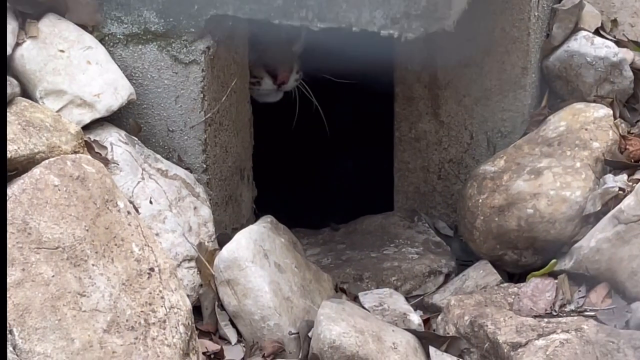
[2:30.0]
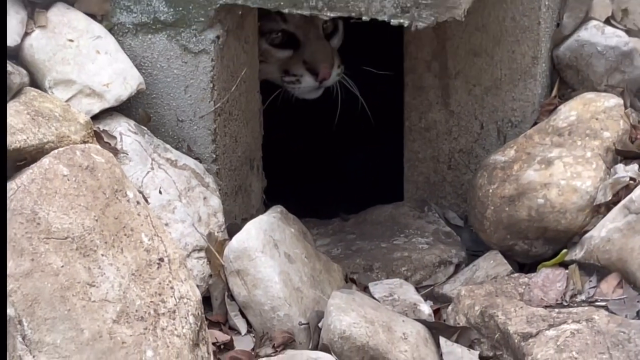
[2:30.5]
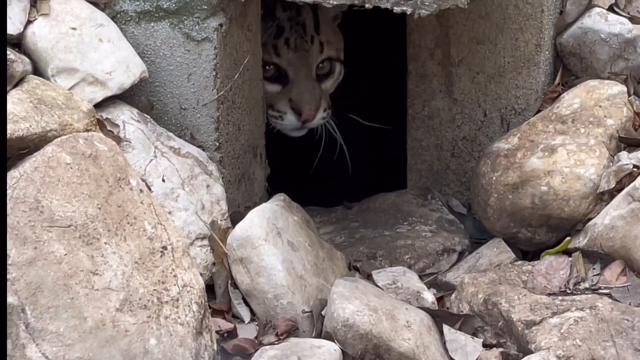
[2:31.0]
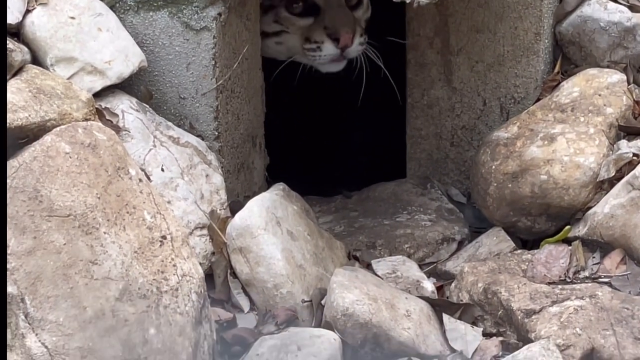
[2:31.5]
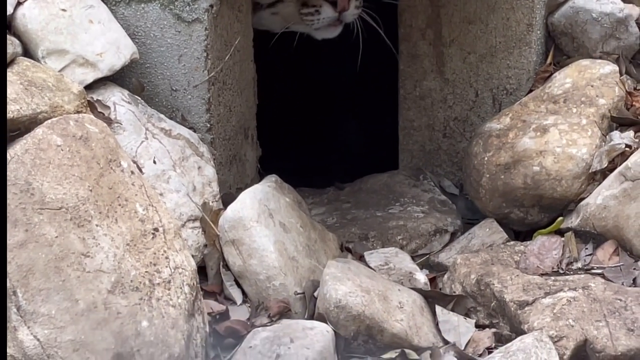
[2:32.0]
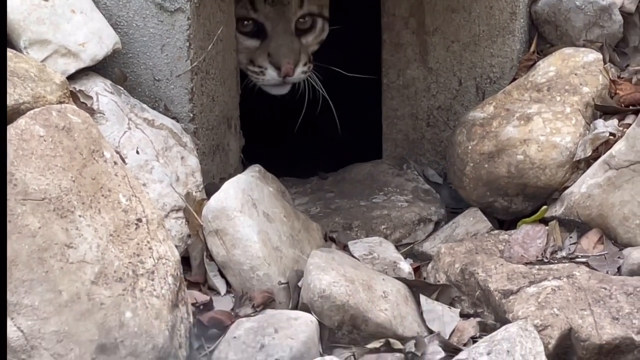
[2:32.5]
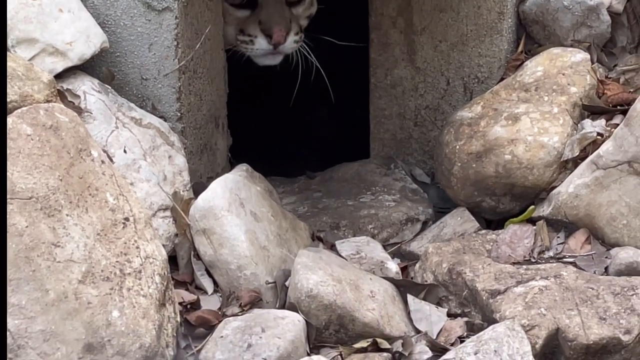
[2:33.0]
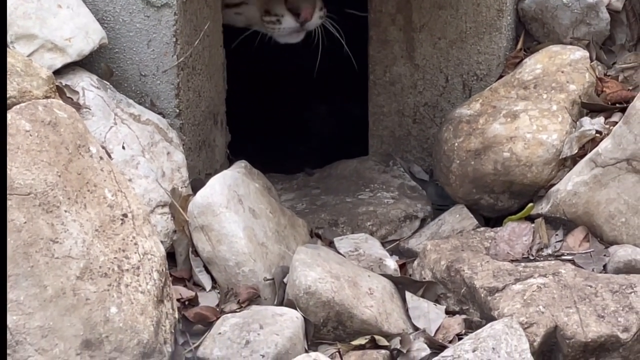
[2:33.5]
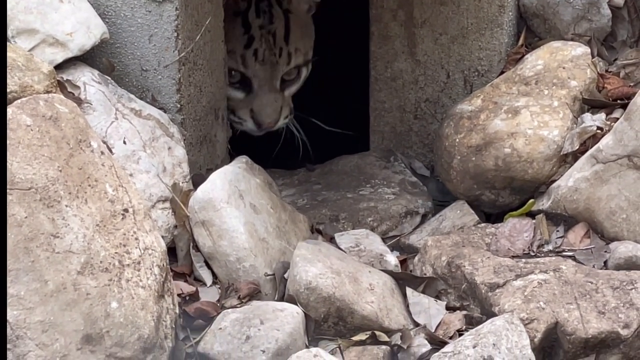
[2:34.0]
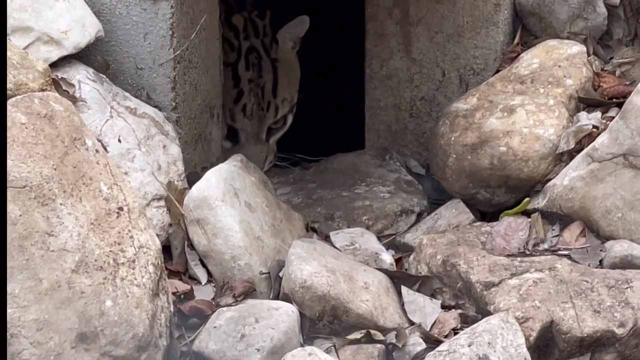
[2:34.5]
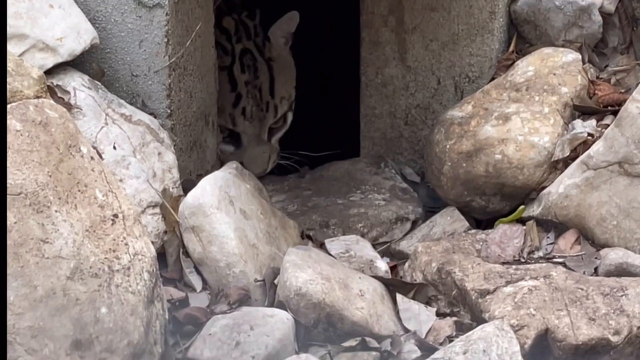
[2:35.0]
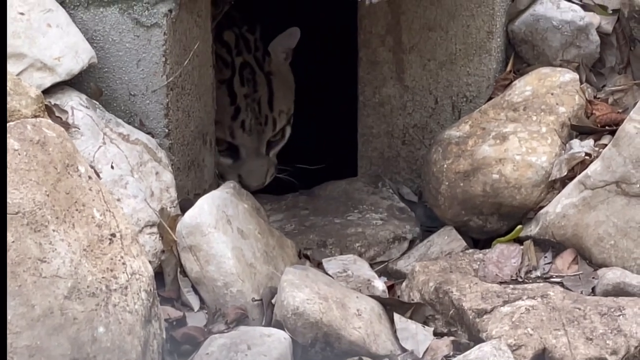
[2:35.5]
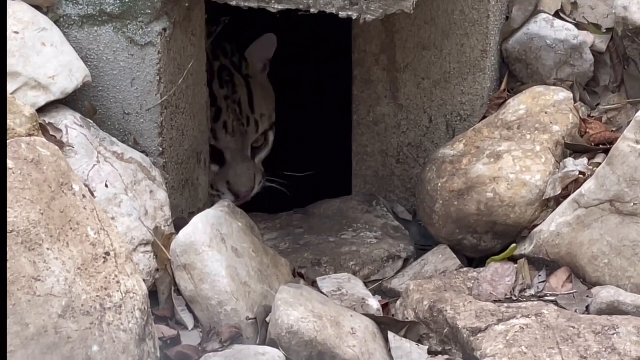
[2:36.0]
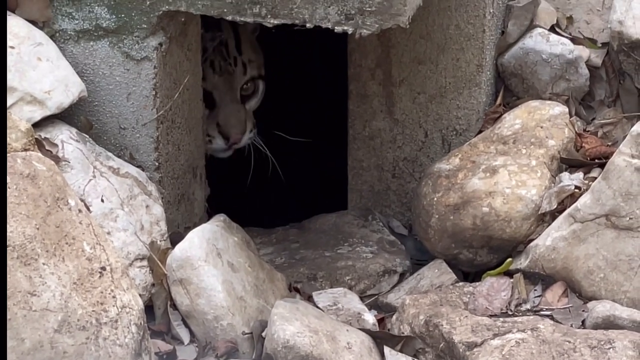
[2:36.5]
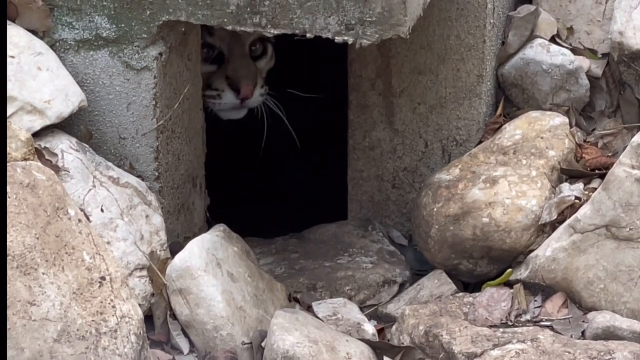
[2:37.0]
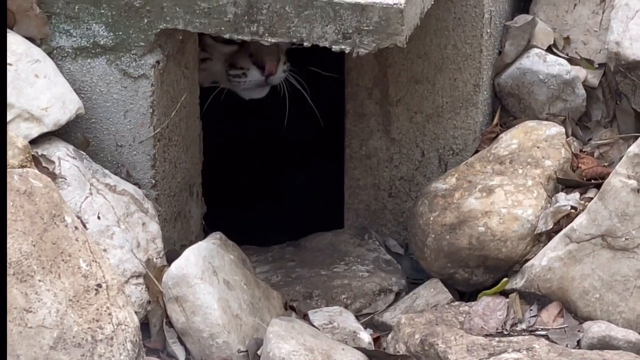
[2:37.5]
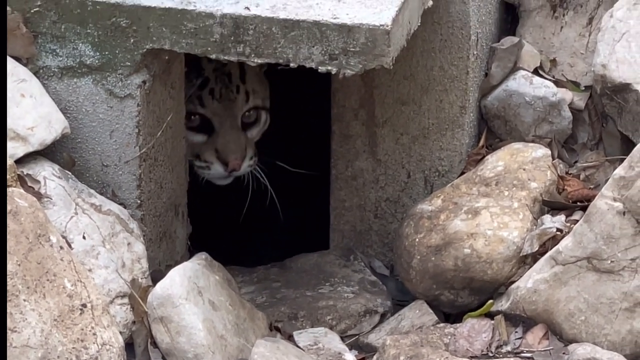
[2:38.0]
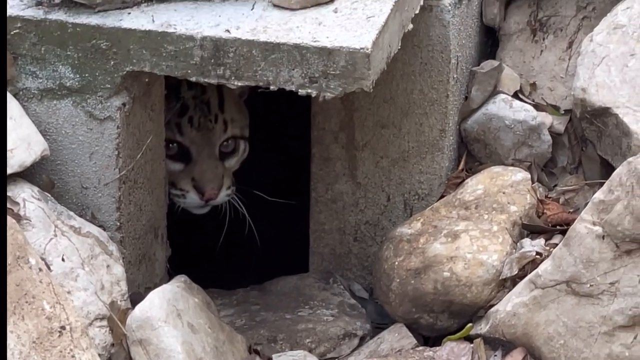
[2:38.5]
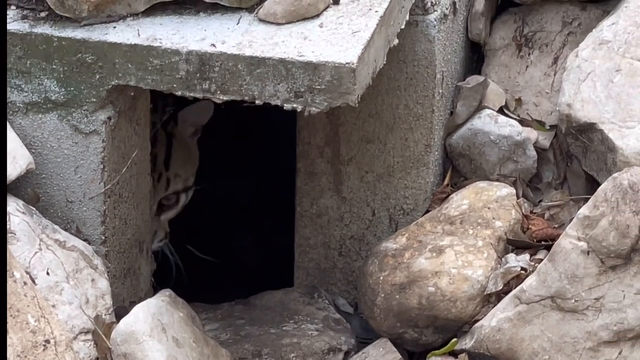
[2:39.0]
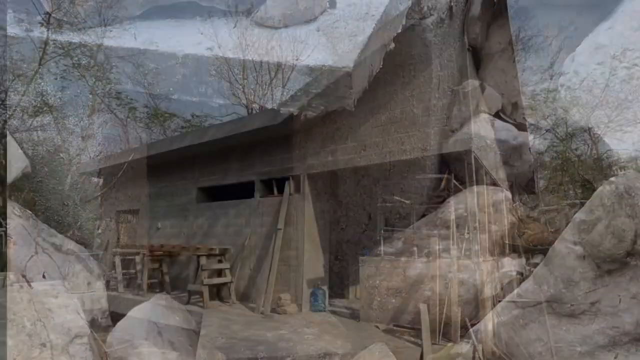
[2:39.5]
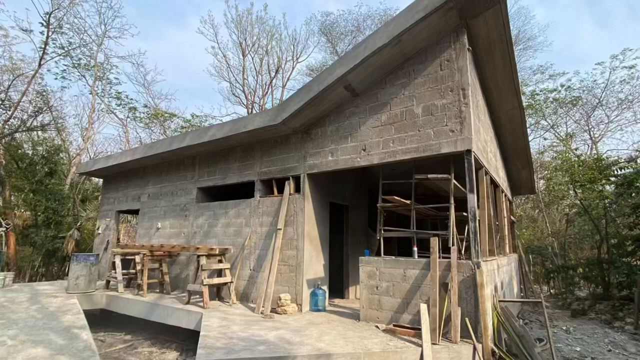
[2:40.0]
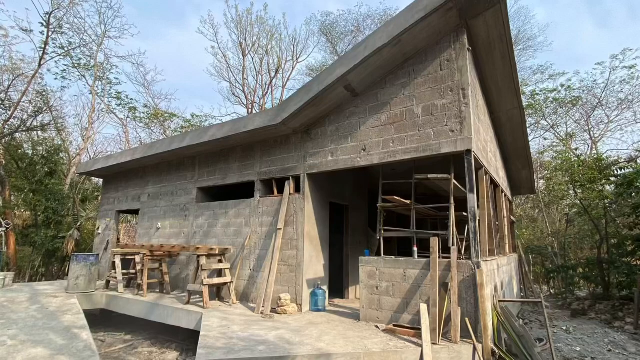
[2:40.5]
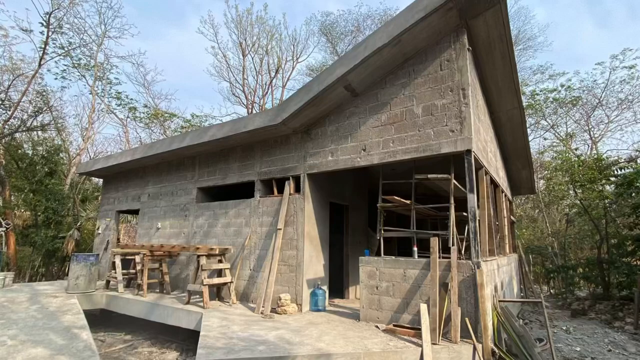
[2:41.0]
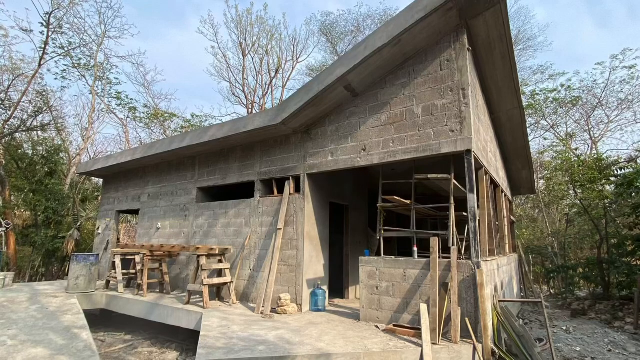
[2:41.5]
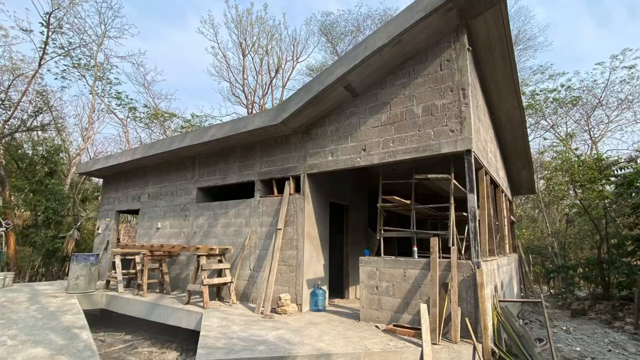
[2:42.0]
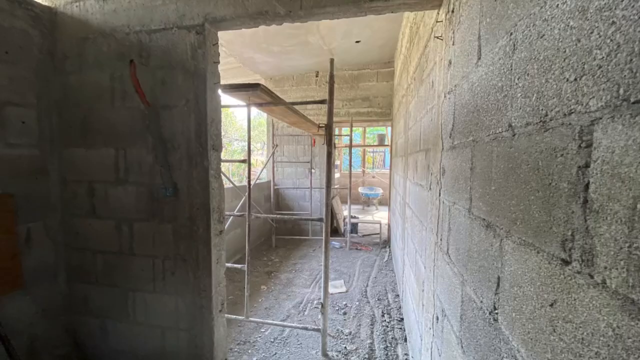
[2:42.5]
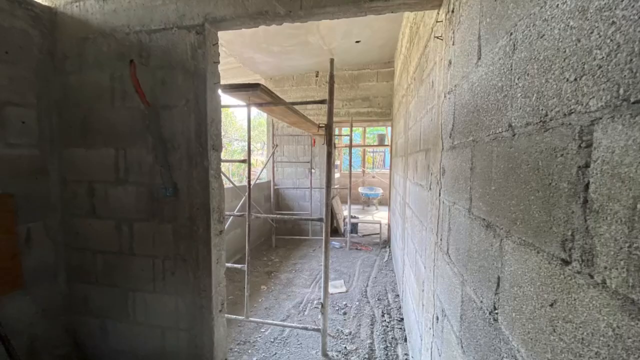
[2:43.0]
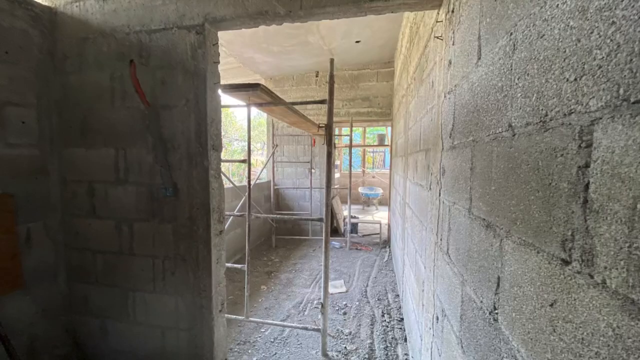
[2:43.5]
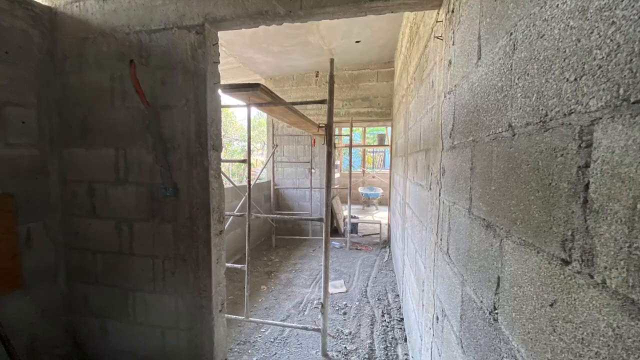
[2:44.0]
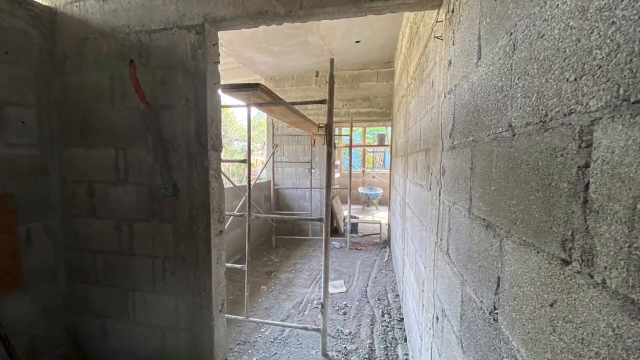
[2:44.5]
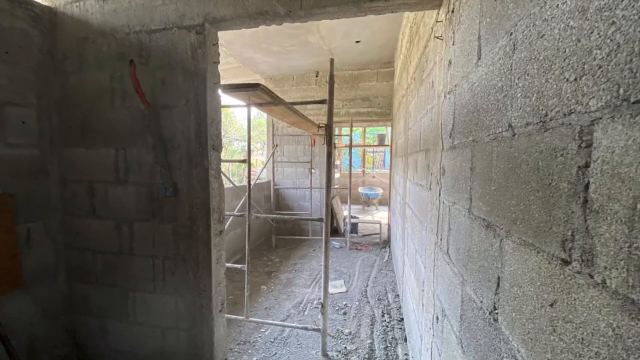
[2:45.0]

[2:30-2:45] A cat is in a hidden spot, hiding by a dark wall; it seems scared to come out and looks miserable. Next, a building is shown that is not finished, with wood materials showing that it is still being built. Inside, work is still being done, with scaffolds inside the building. The building looks like it may be a new home for the animals, or a new hospital for treating the sick animals.